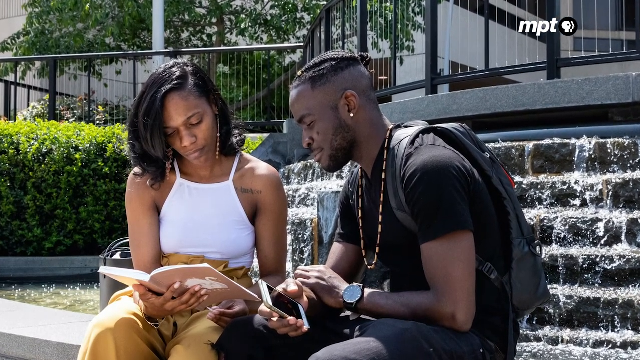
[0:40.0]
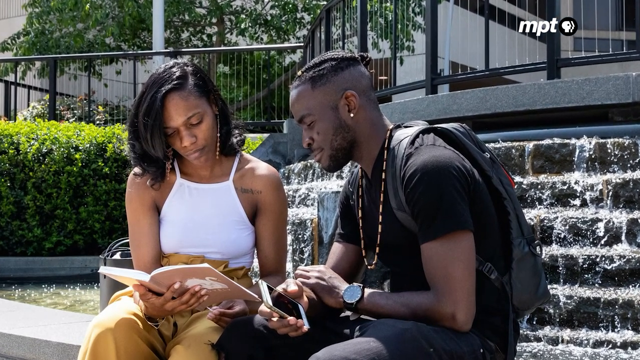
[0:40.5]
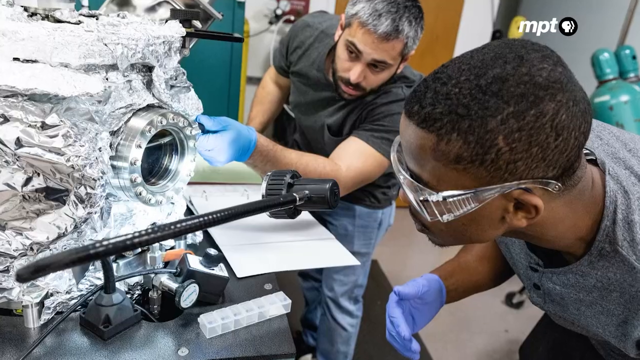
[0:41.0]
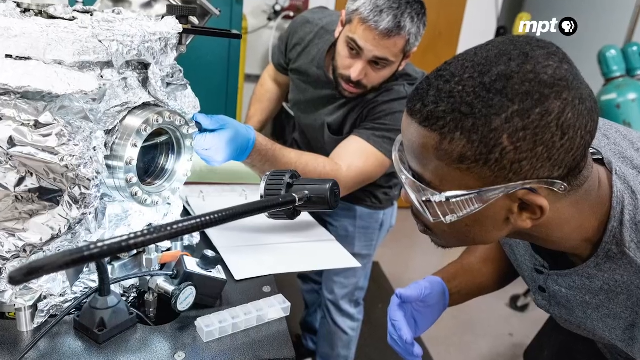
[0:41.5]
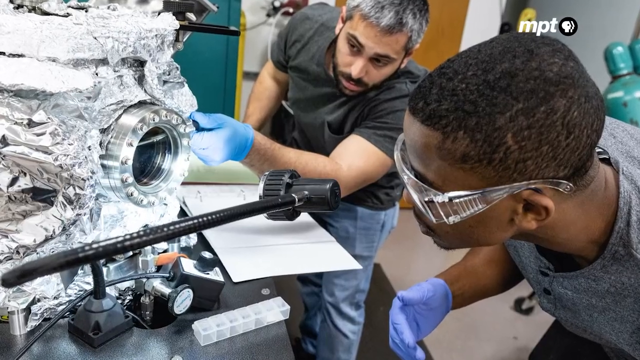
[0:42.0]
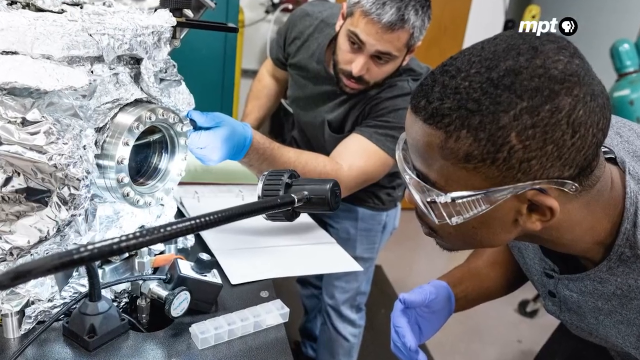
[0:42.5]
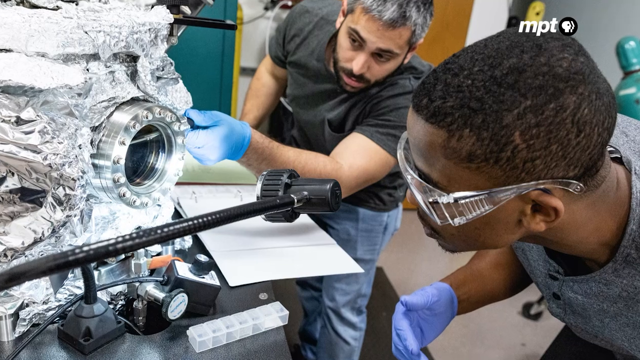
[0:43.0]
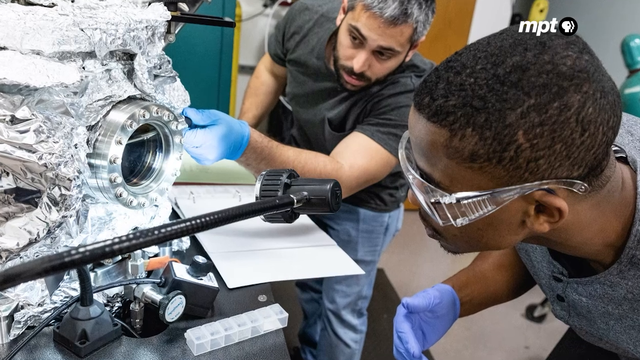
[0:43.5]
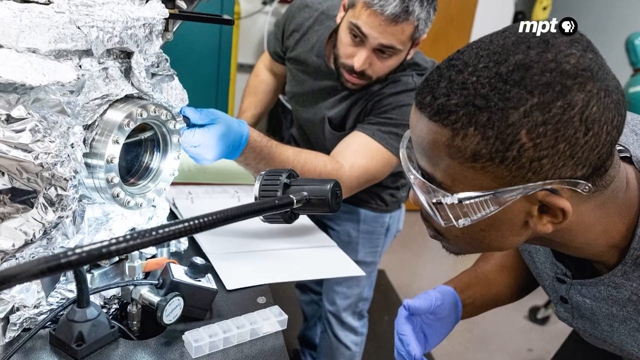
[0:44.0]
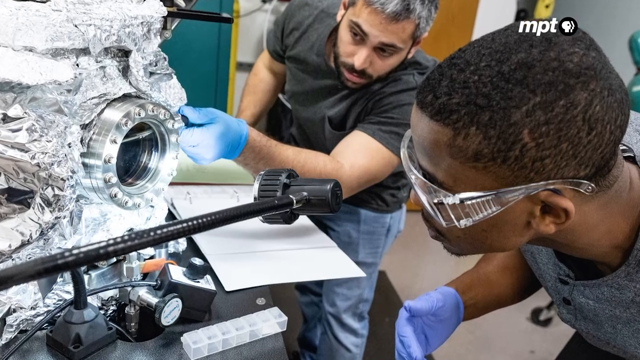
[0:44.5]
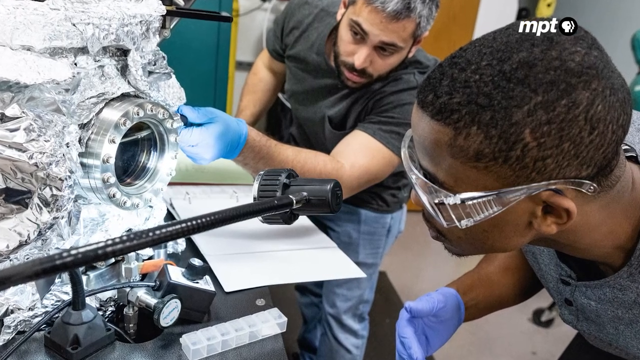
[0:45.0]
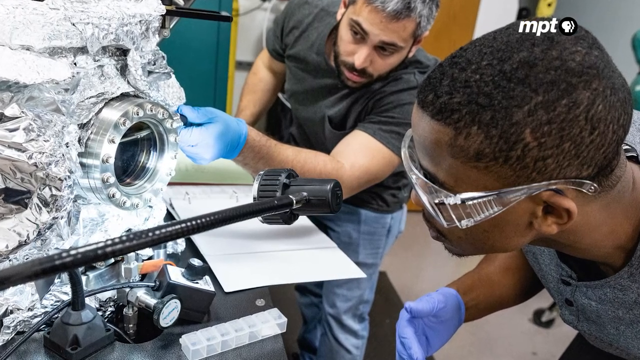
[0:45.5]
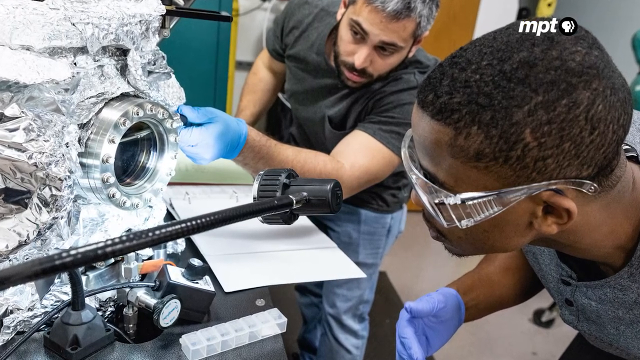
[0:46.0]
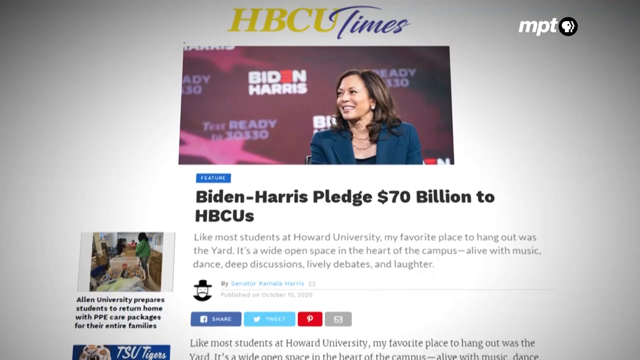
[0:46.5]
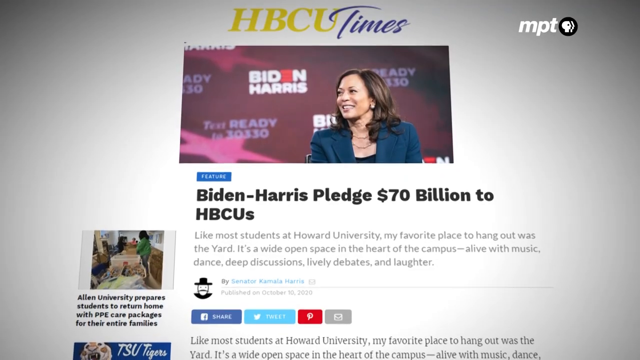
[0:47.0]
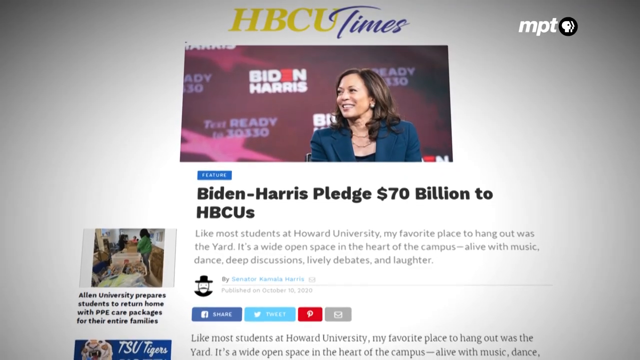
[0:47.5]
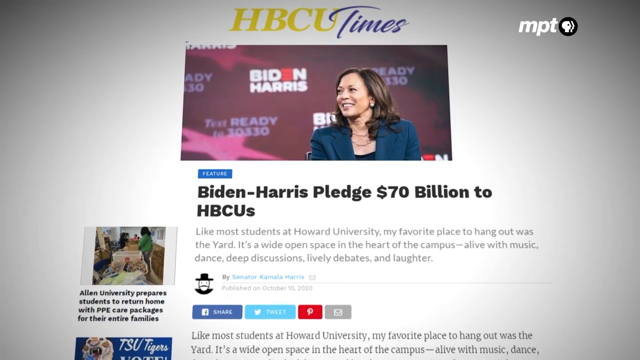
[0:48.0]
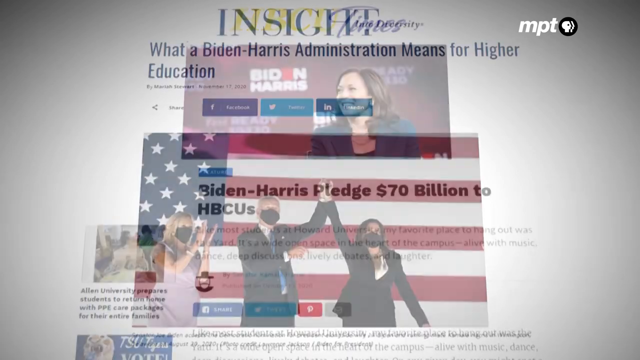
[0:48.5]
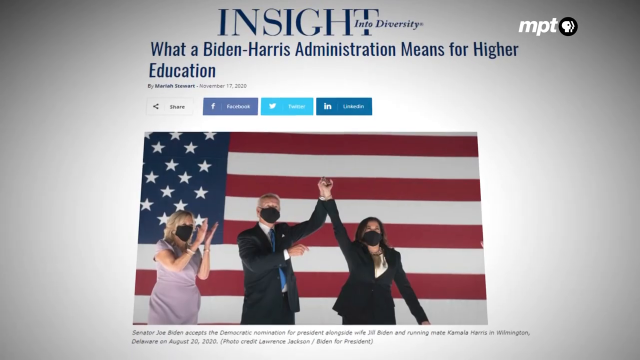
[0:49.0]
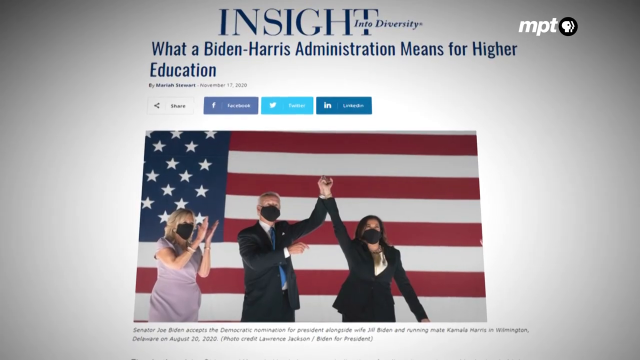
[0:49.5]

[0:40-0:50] The screen shifts to two male candidates, one wearing a blue hand glove and the other wearing glasses, with instruments on top, suggesting it might be an engineering or science lecture. The screen changes again to an article headlined "Biden-Harris pledge 70 billion dollars to HBCUS", with information written below it and logos of various social media platforms displayed underneath. When the screen shifts again, "insight into diversity" appears.